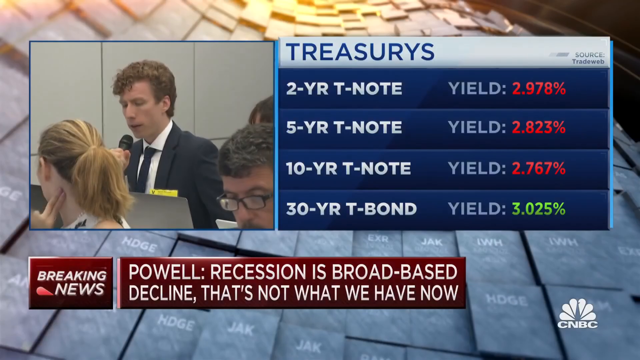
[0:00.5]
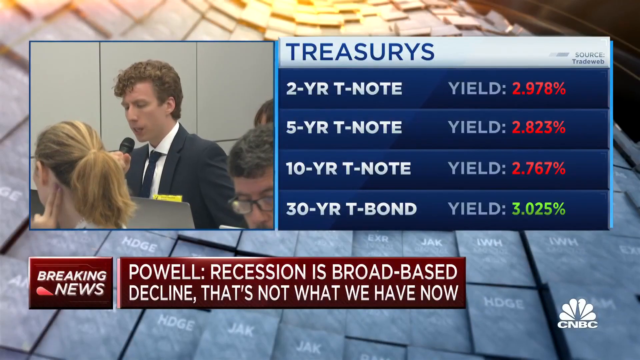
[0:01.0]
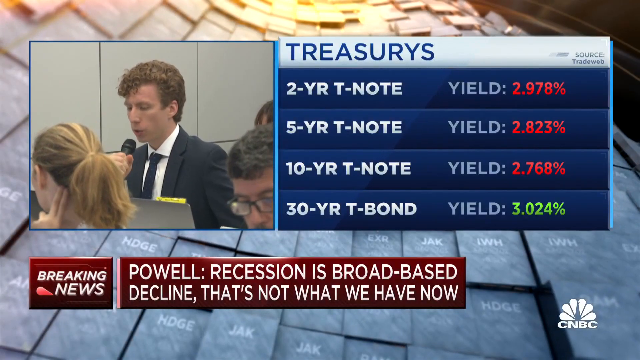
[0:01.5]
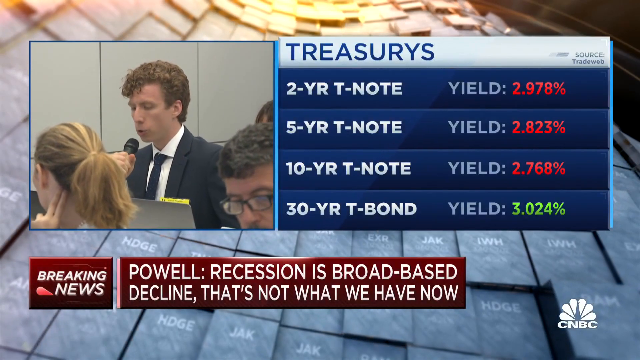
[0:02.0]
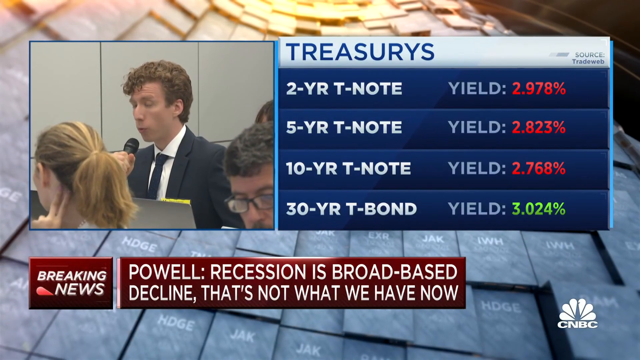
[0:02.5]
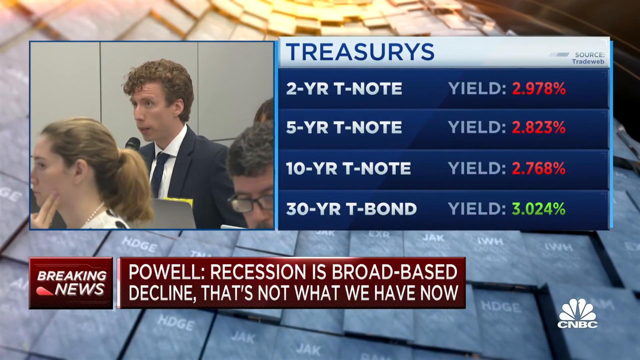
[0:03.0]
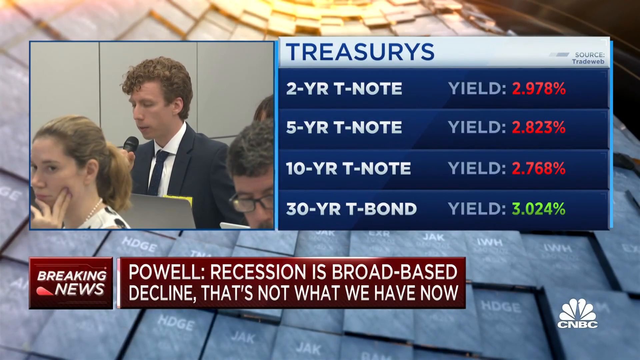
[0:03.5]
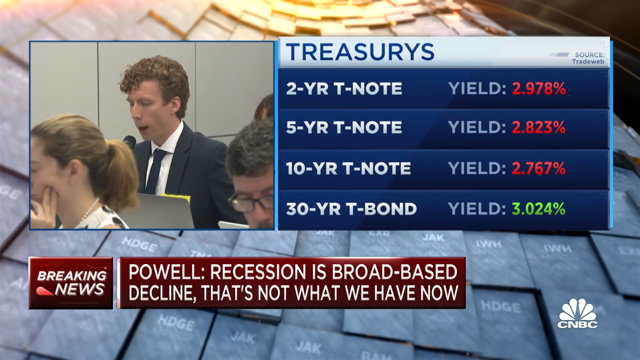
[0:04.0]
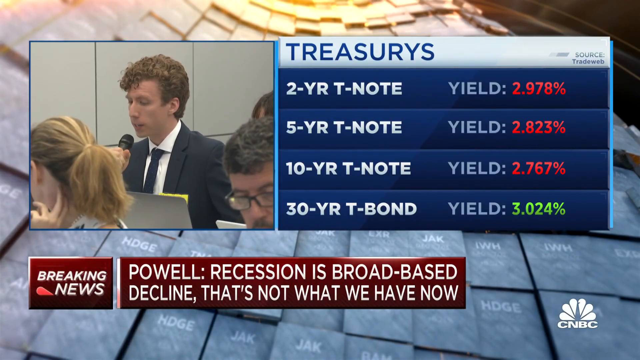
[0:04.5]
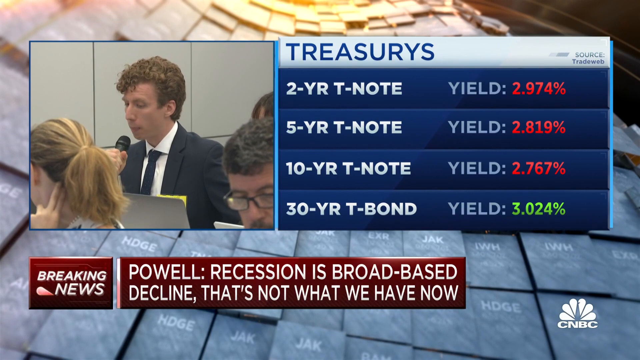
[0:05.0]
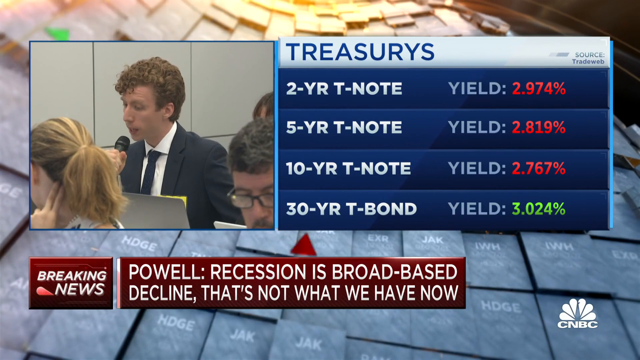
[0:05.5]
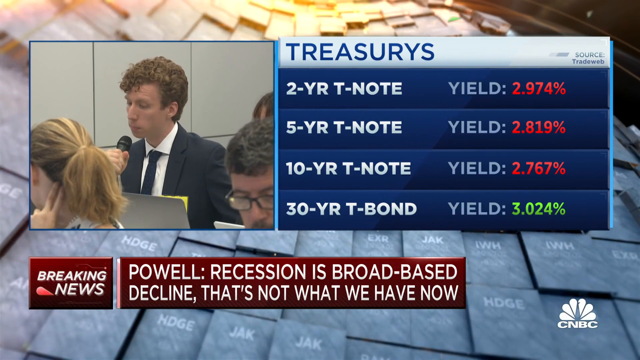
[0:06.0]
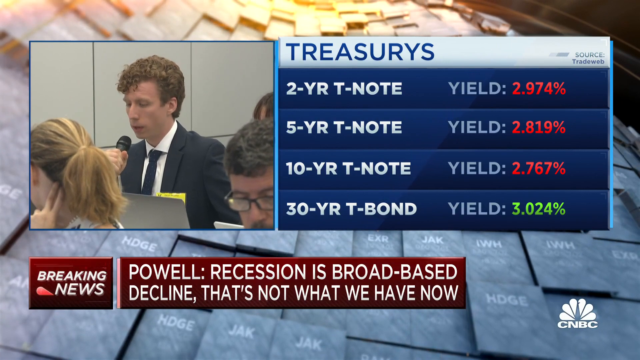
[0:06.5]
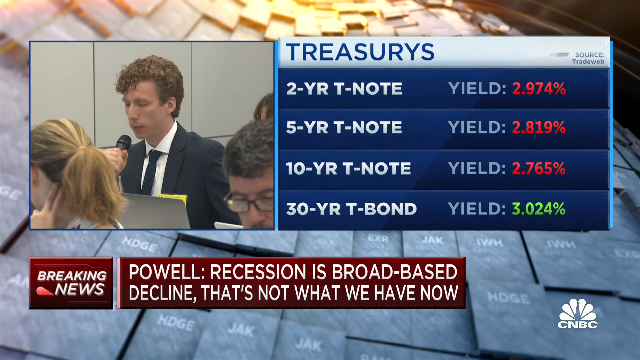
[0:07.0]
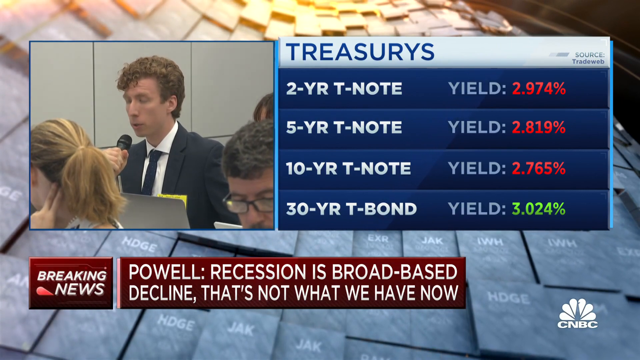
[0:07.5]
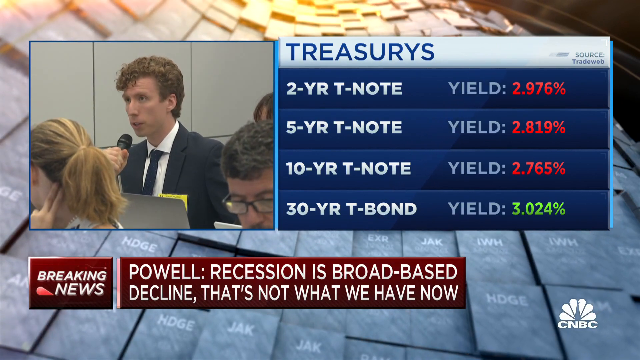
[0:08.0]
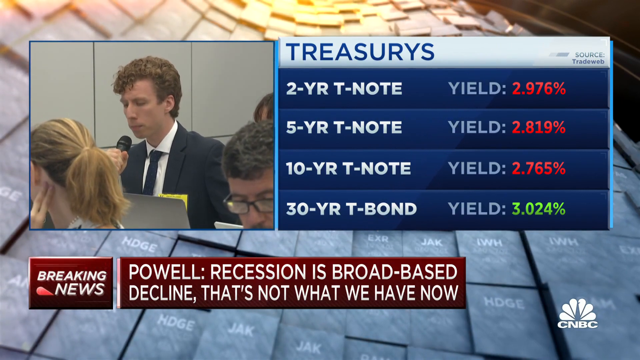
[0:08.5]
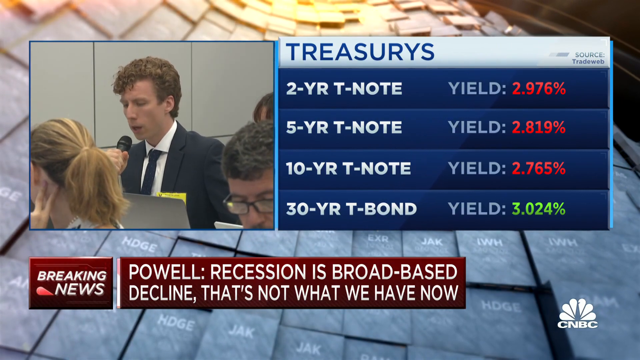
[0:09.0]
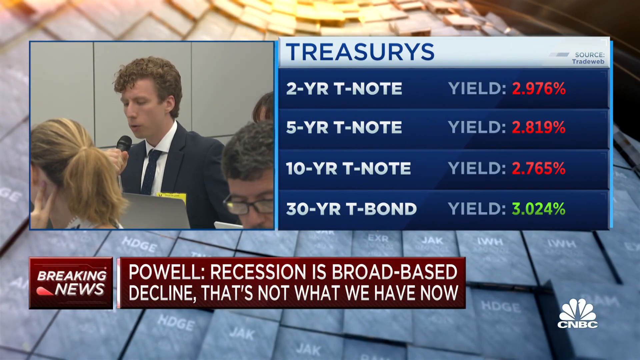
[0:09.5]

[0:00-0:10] A breaking news segment features Mr. Powell, with text saying "recession is broad-based decline." Rates are shown for the two-year treasury note, the five-year treasury note, the 10-year treasury note and the 30-year treasury bond. Among the yields listed is 2.768, and the yield on the bond is 3.024.